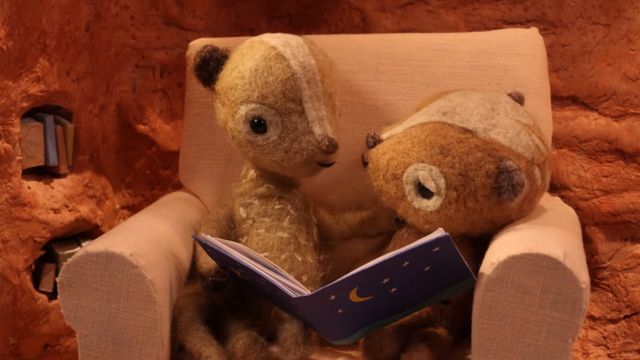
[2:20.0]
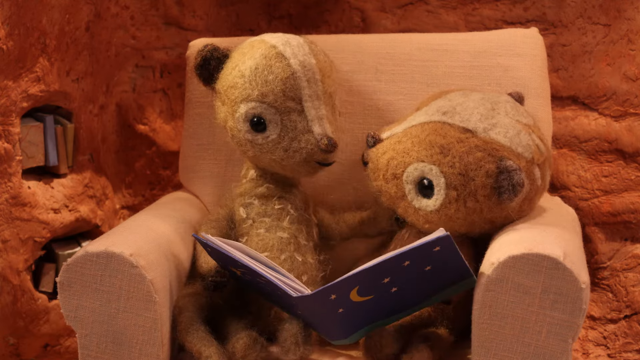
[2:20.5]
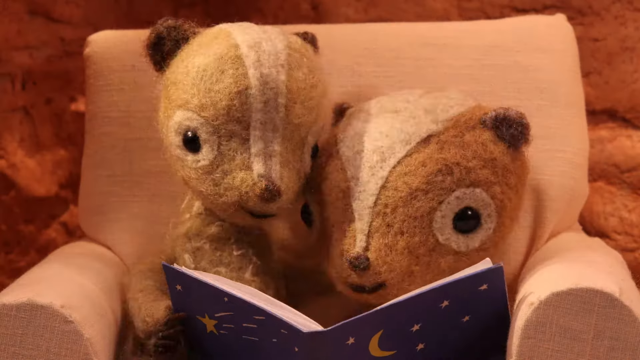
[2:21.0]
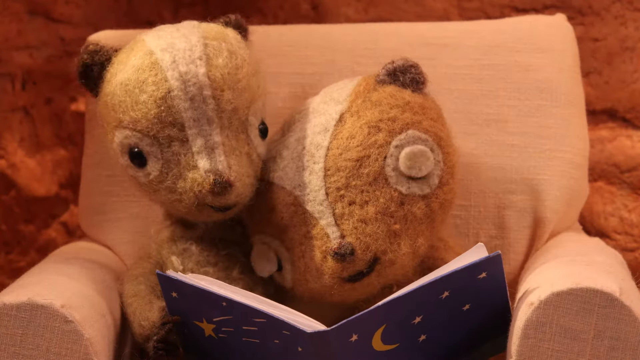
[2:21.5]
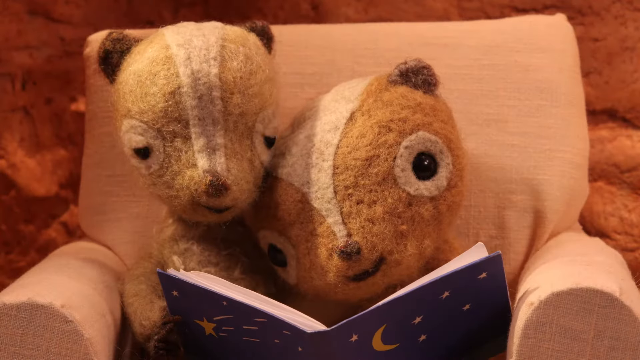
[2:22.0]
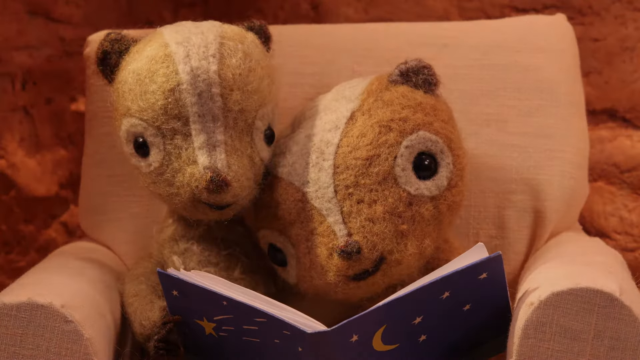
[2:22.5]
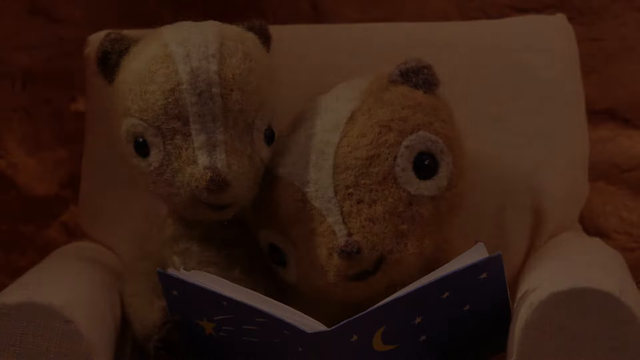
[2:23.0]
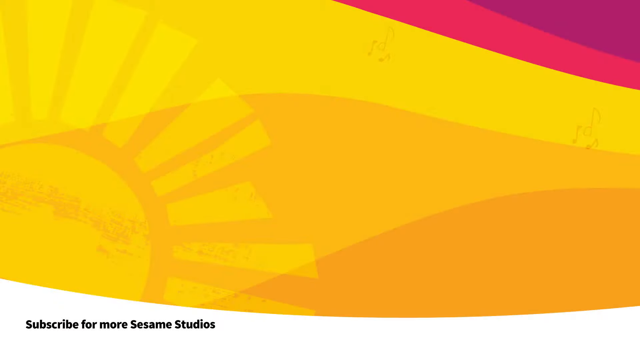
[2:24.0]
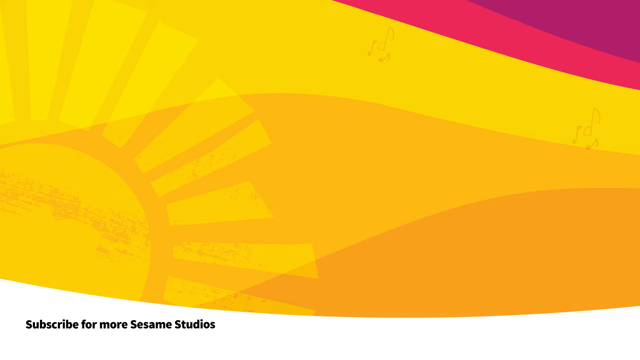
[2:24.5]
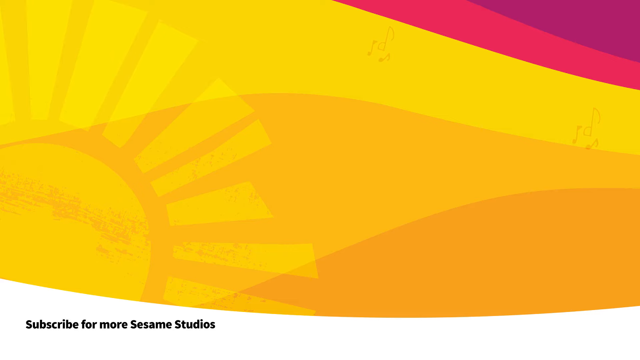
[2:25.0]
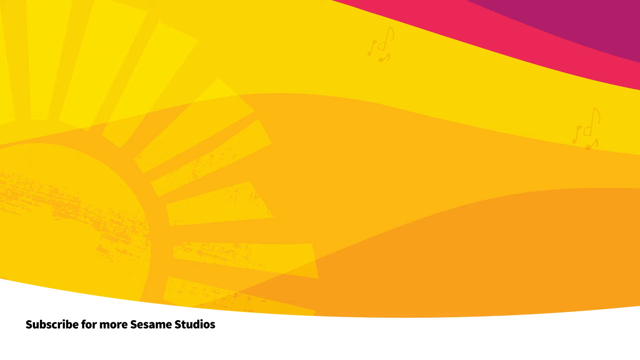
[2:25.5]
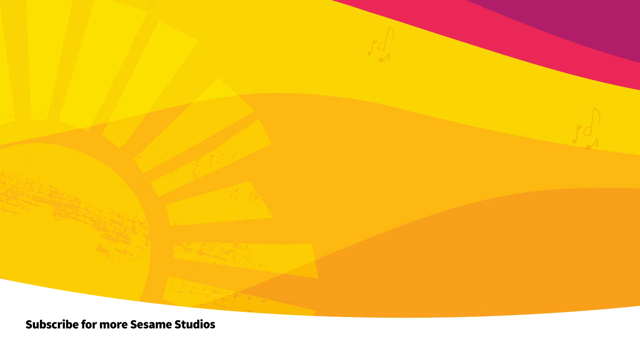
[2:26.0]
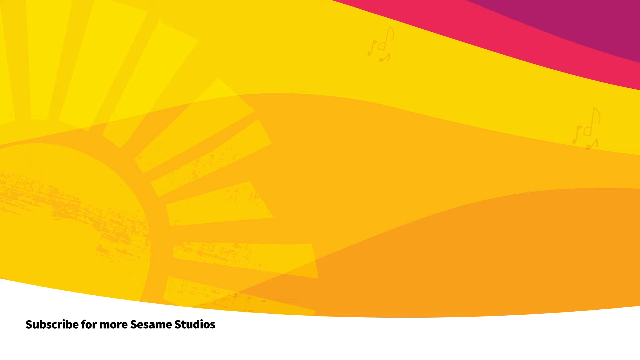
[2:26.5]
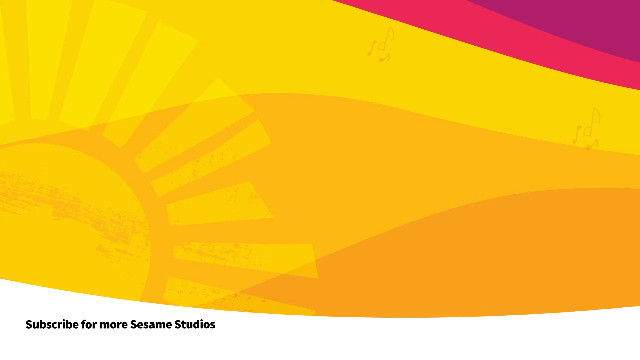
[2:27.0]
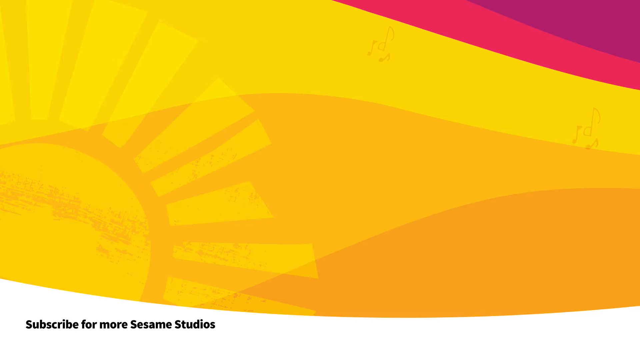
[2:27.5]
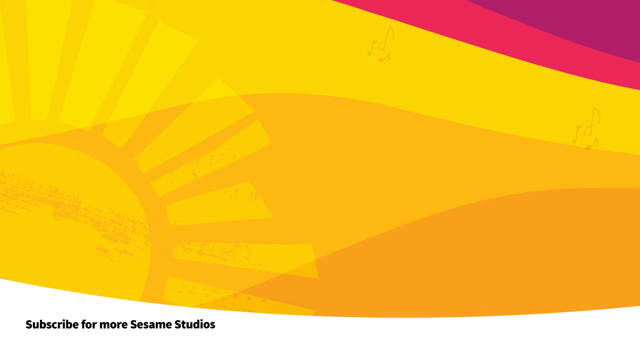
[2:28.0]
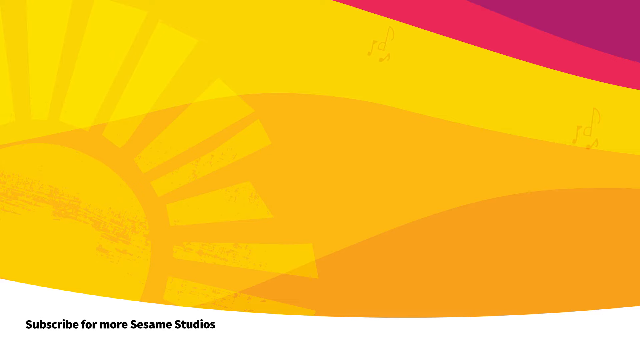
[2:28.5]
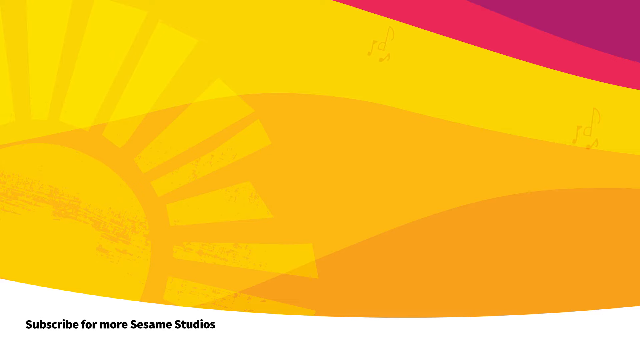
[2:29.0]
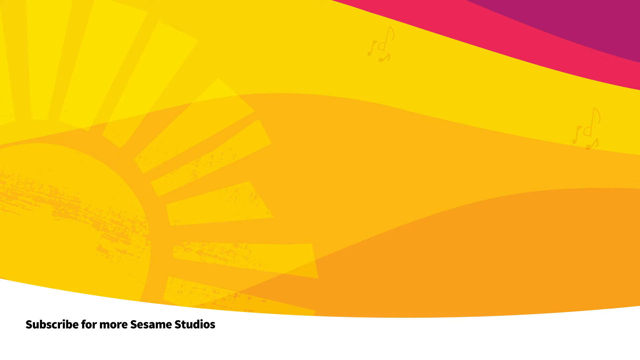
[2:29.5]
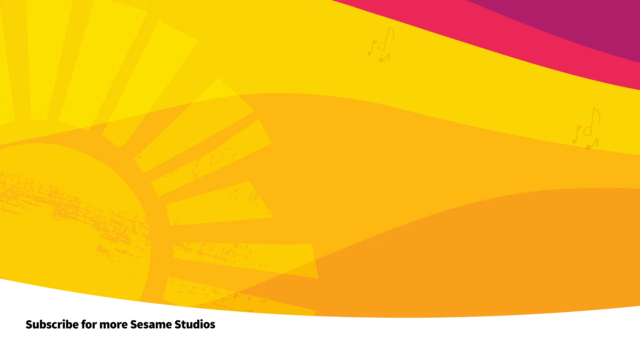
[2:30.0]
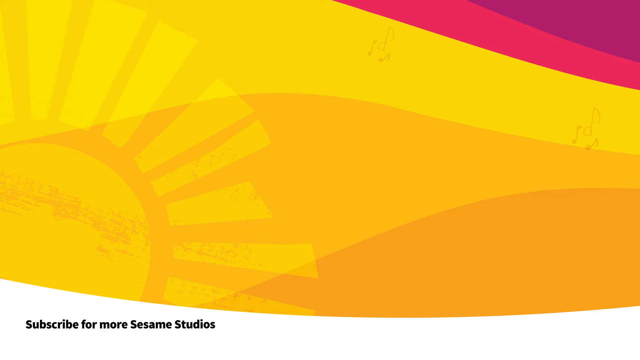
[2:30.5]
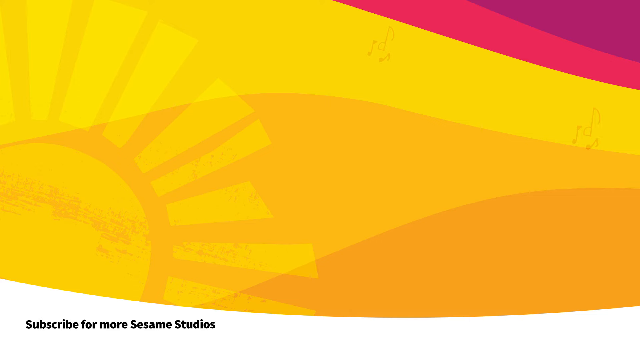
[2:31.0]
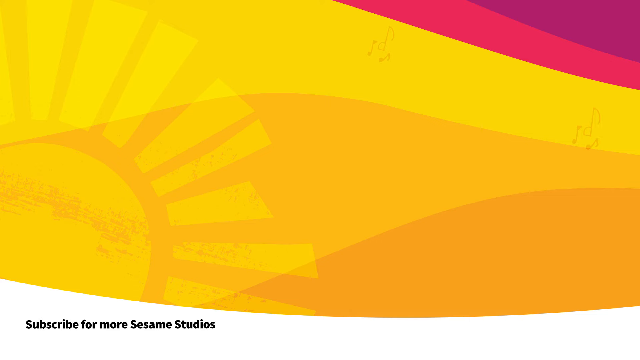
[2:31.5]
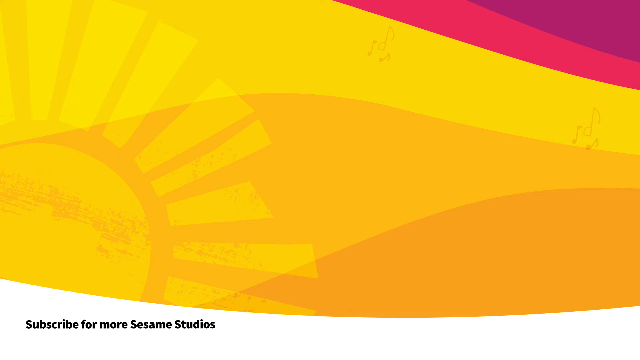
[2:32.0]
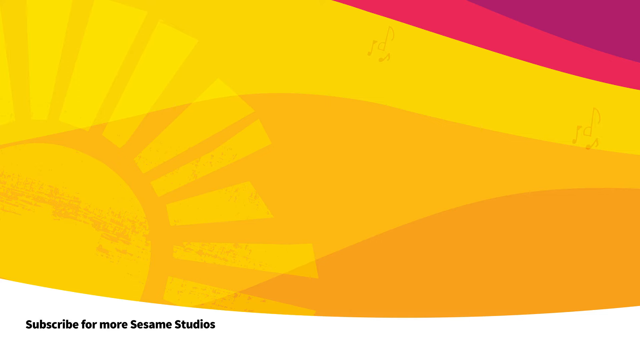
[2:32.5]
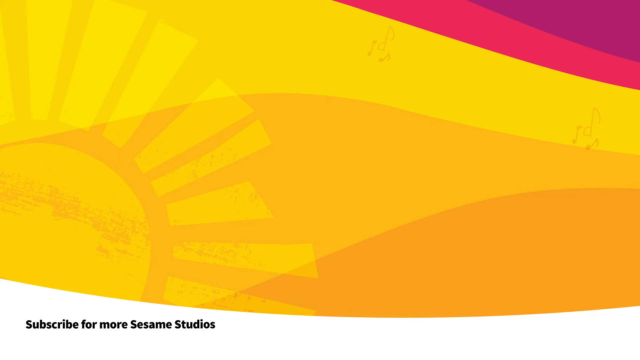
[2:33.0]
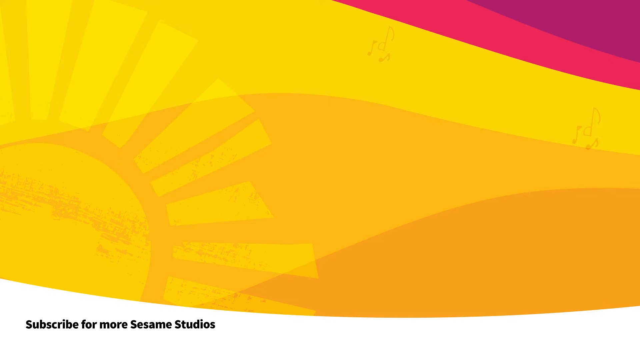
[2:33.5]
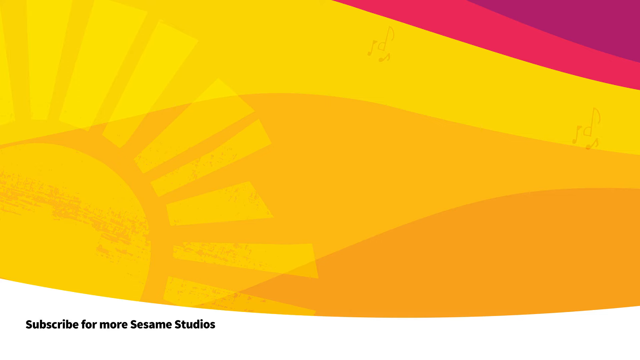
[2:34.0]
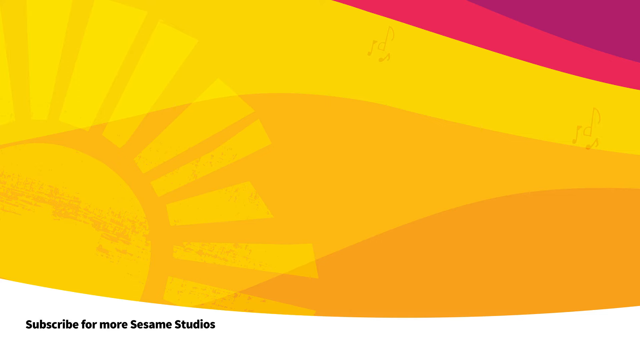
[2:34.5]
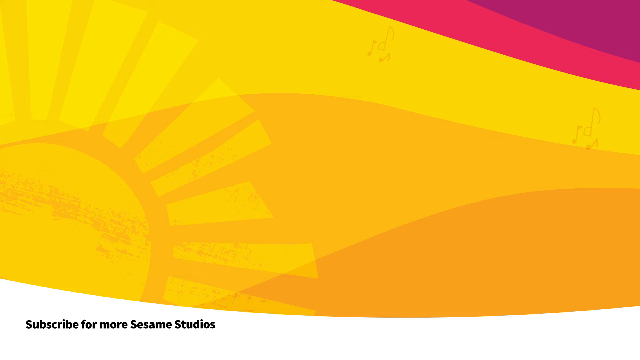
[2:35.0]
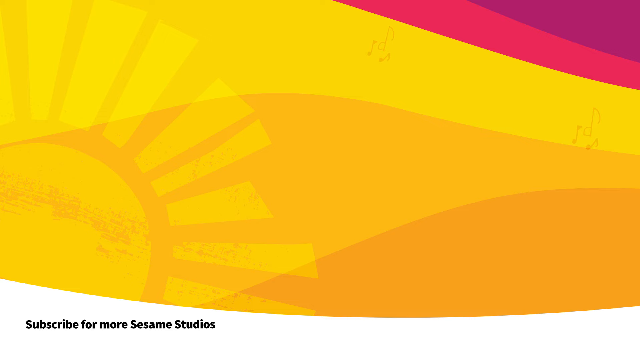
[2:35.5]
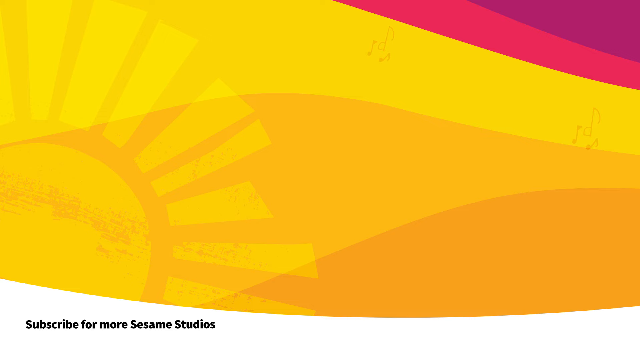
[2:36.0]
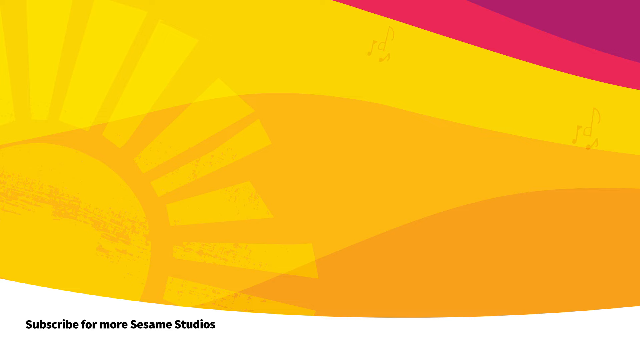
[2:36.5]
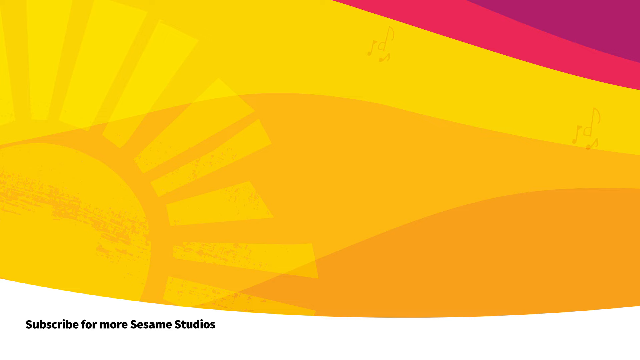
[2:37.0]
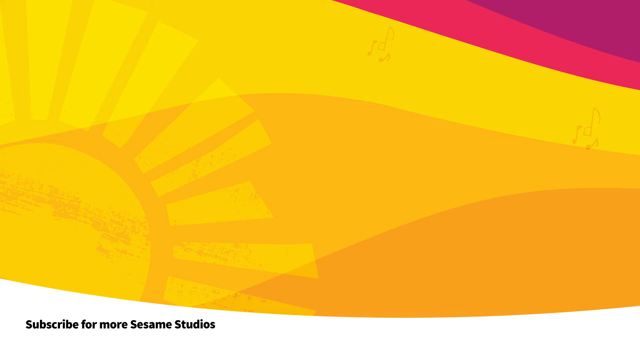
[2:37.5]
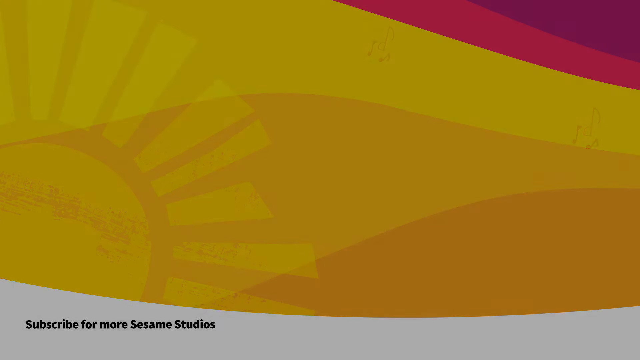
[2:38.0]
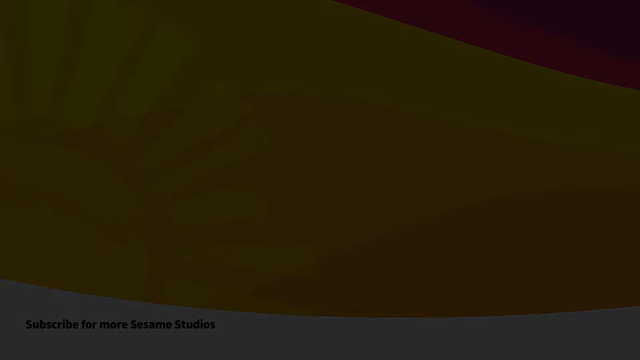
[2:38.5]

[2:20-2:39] Two small animated squirrels, one darker than the other, sit right beside one another in a cushion chair, reading a book with stars and a moon on its outside cover and blinking as they read. Behind them is the rock-like structure they live in, with a shelf on the left that seems to hold some books. The scene switches to a sun on the left with yellows and oranges running from left to right, some red in the top right corner, and a white section at the bottom with black letters reading "subscribe for more Sesame Studios." The screen then fades to black.